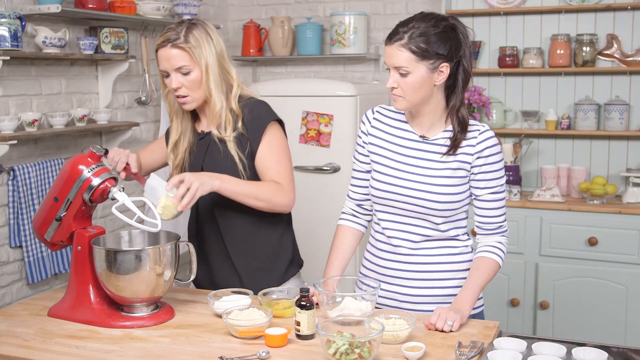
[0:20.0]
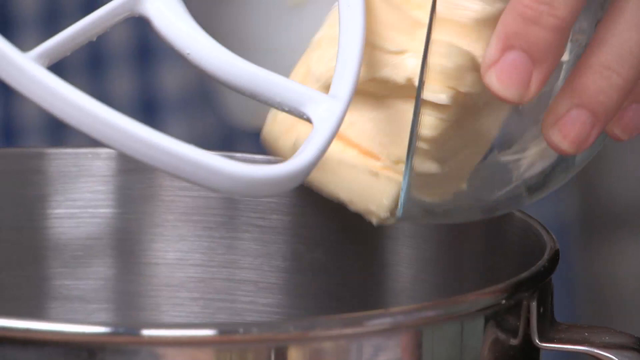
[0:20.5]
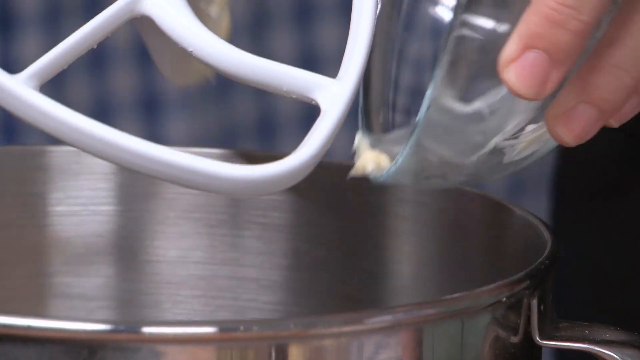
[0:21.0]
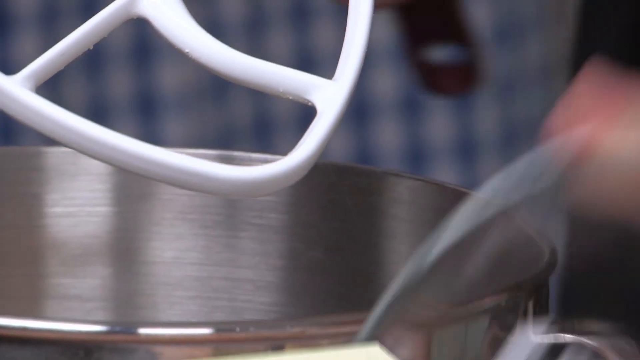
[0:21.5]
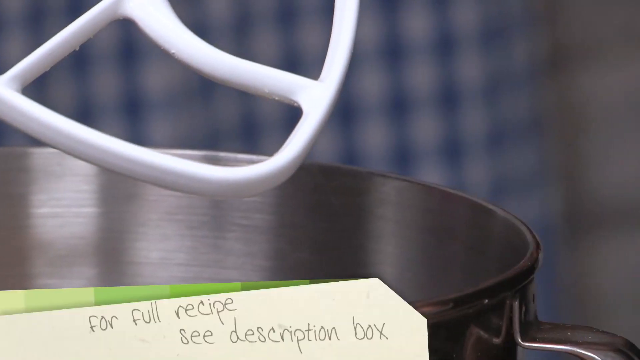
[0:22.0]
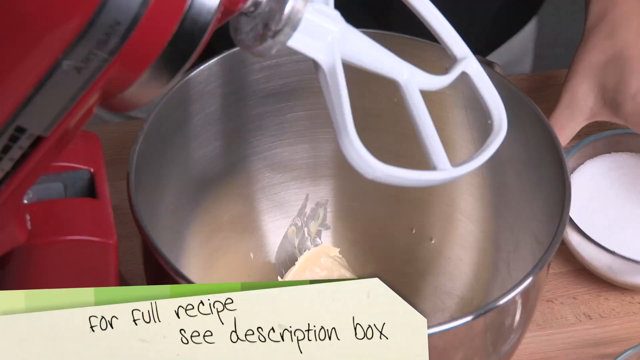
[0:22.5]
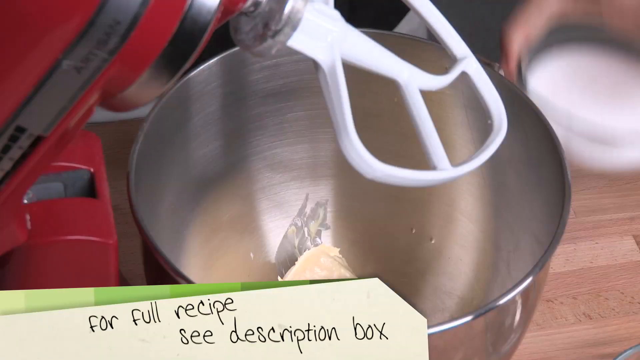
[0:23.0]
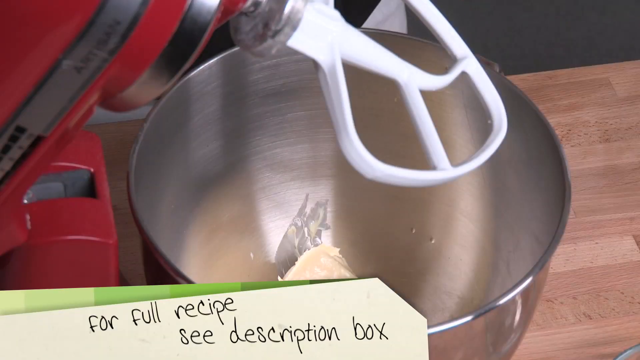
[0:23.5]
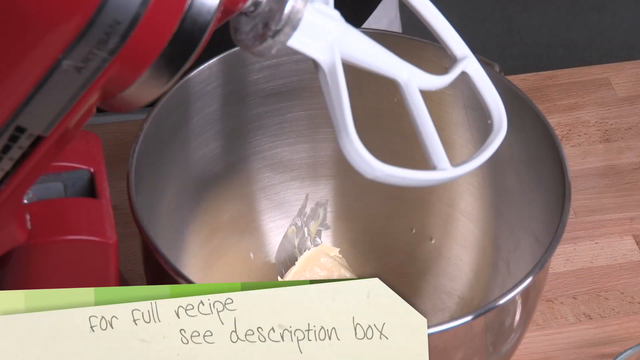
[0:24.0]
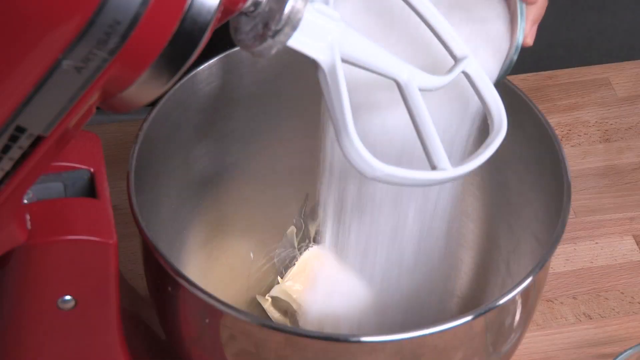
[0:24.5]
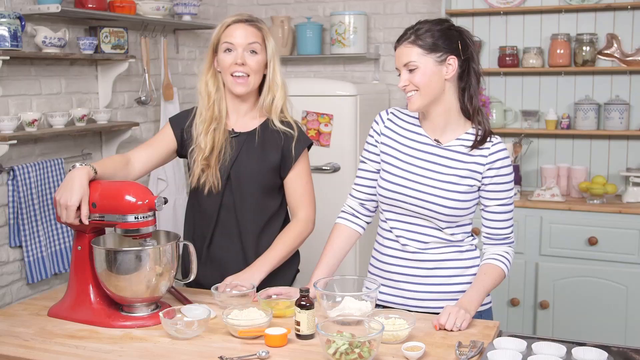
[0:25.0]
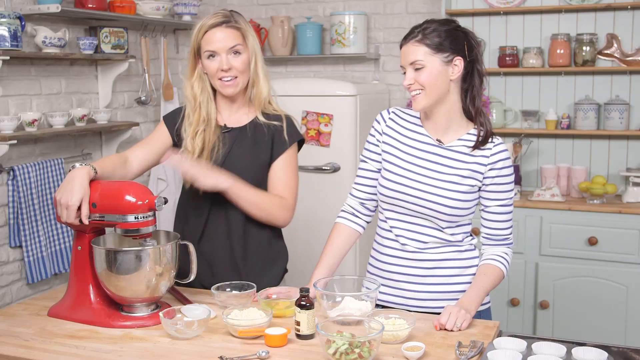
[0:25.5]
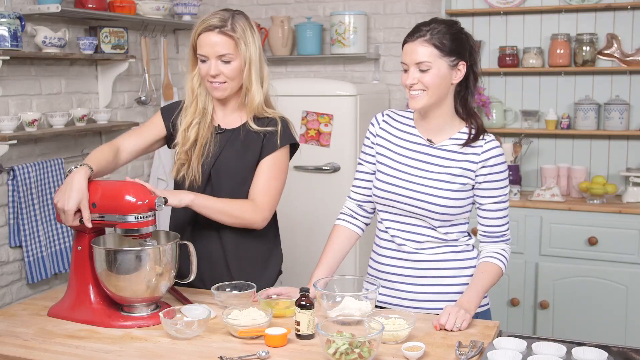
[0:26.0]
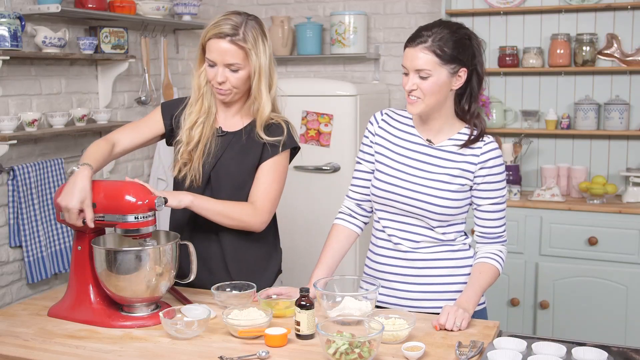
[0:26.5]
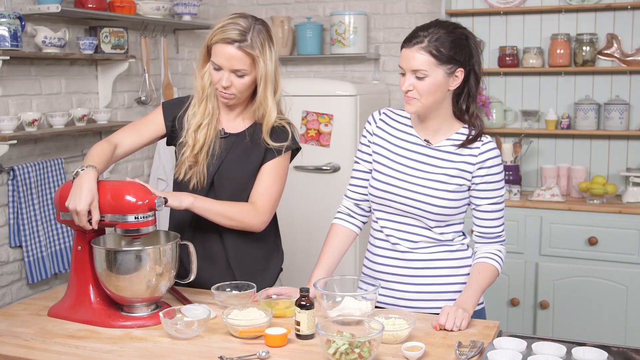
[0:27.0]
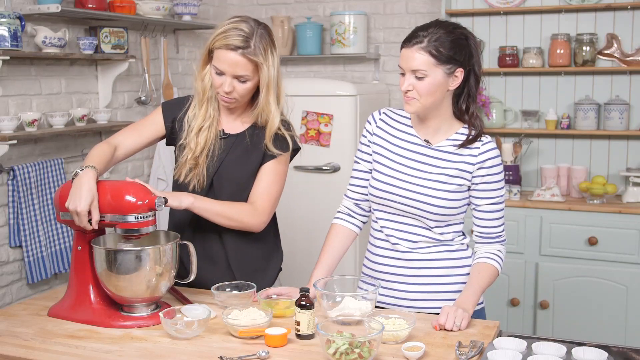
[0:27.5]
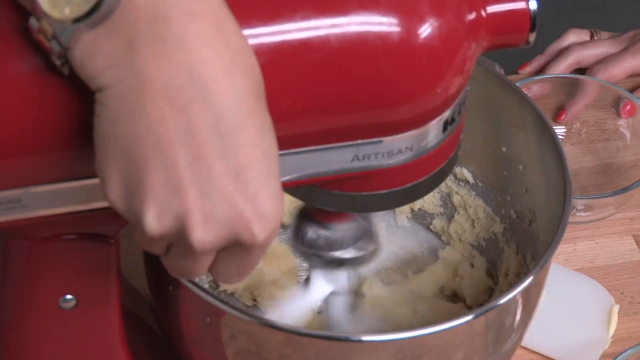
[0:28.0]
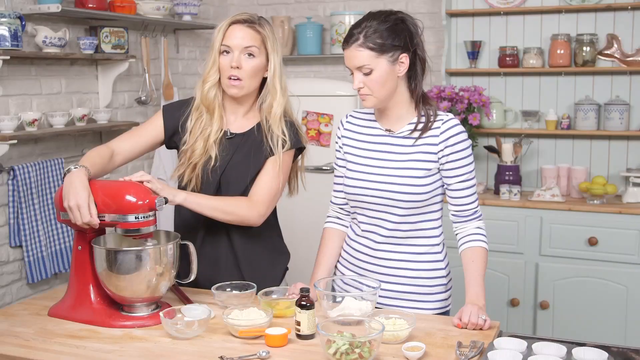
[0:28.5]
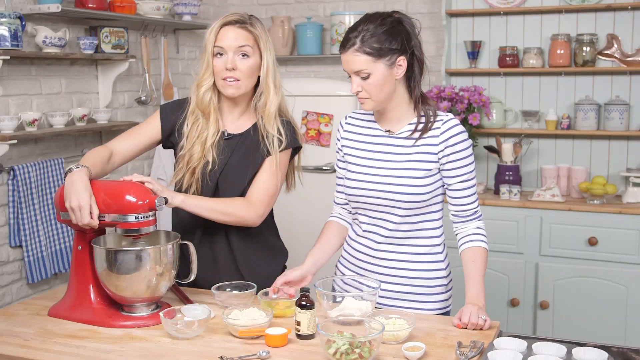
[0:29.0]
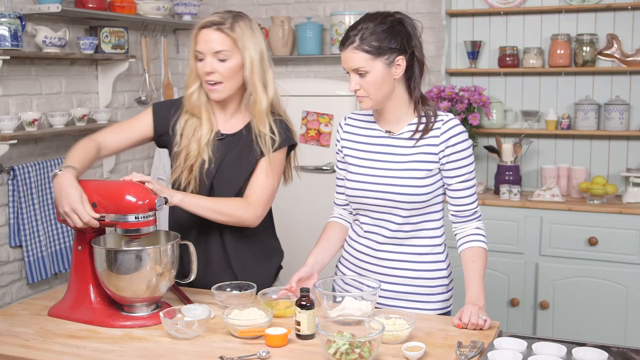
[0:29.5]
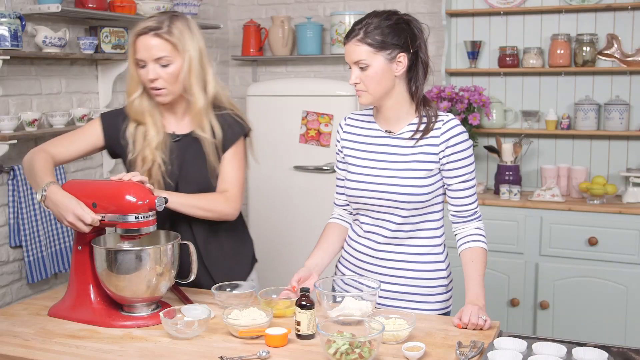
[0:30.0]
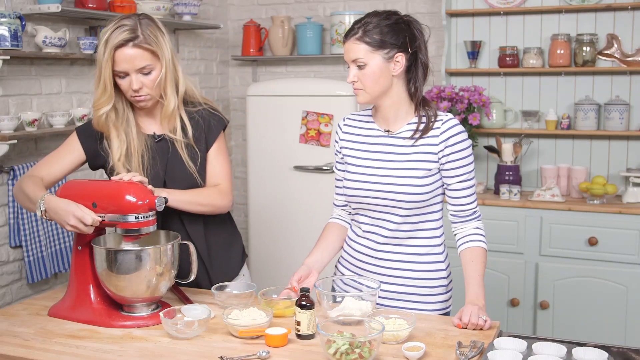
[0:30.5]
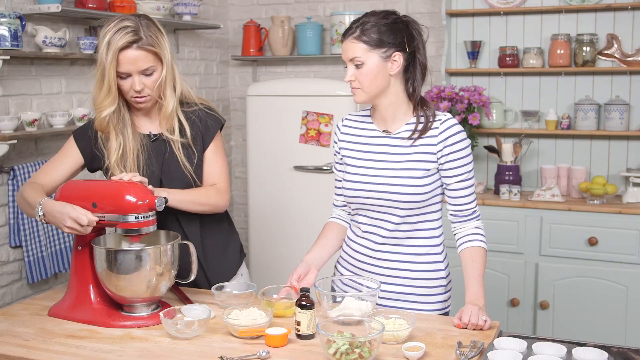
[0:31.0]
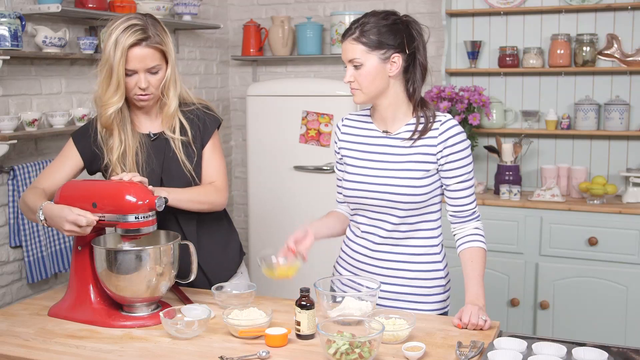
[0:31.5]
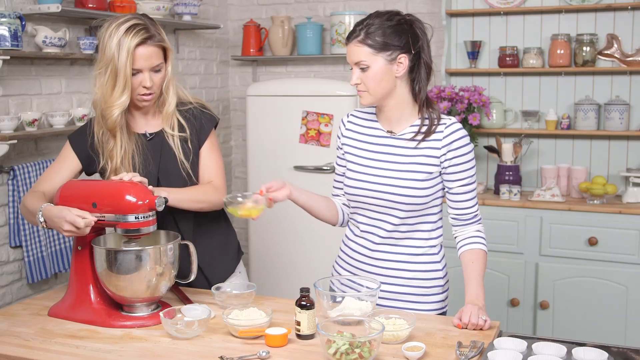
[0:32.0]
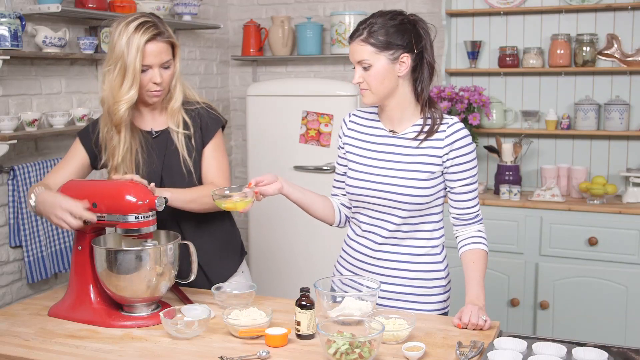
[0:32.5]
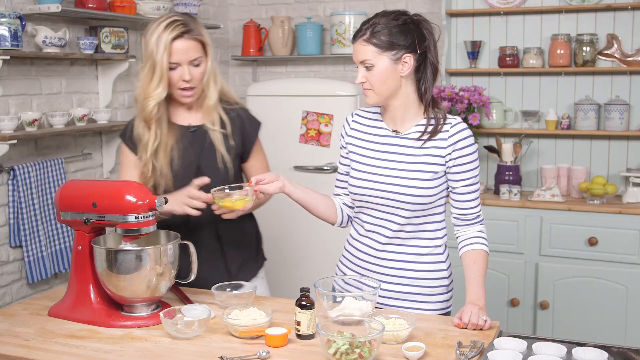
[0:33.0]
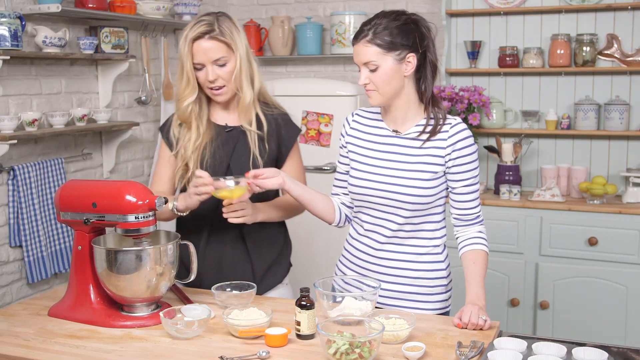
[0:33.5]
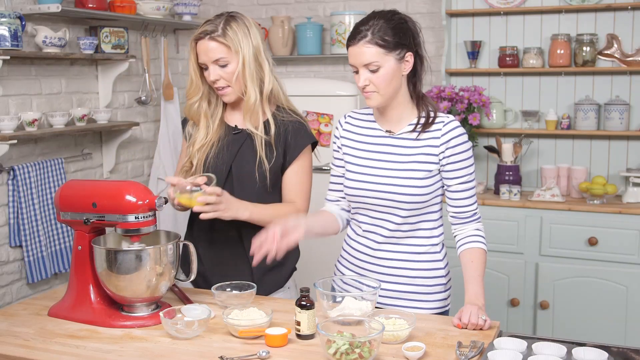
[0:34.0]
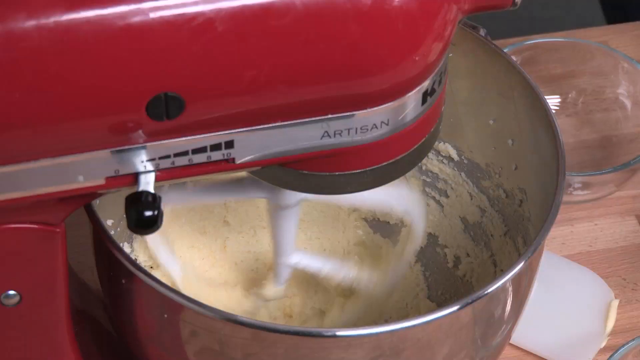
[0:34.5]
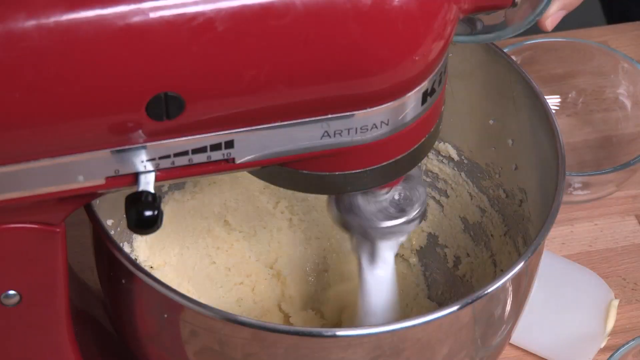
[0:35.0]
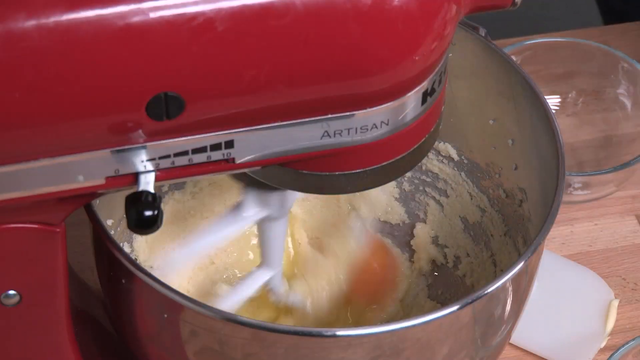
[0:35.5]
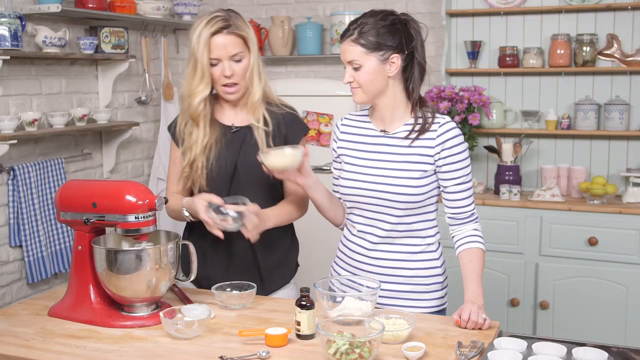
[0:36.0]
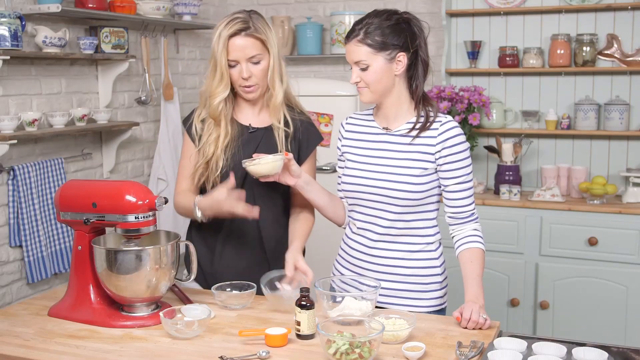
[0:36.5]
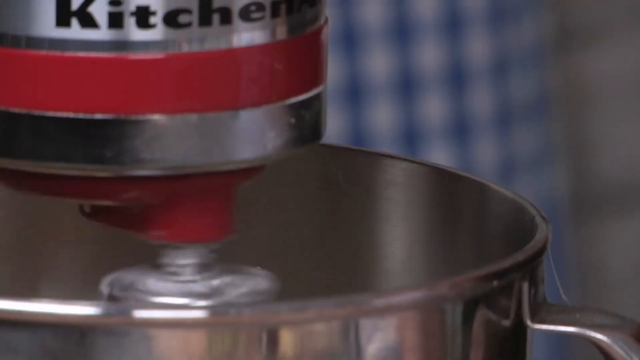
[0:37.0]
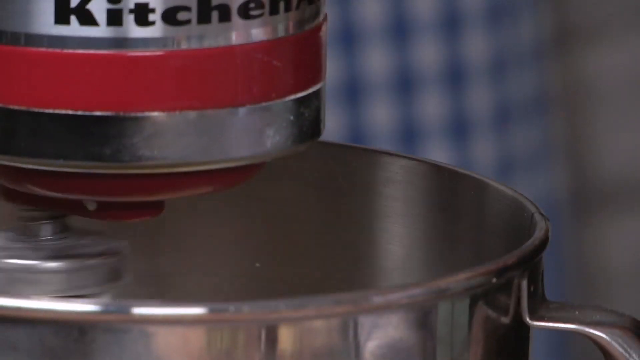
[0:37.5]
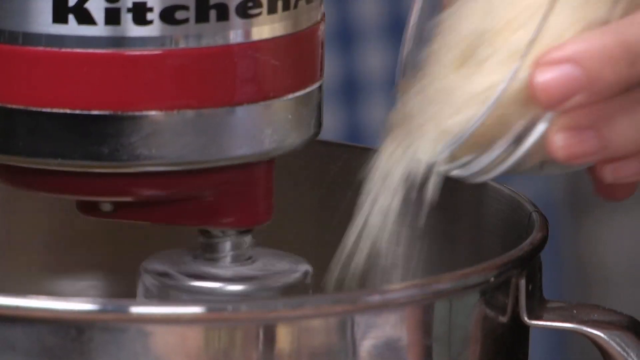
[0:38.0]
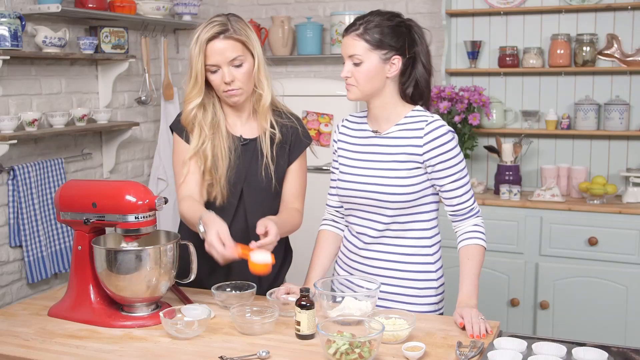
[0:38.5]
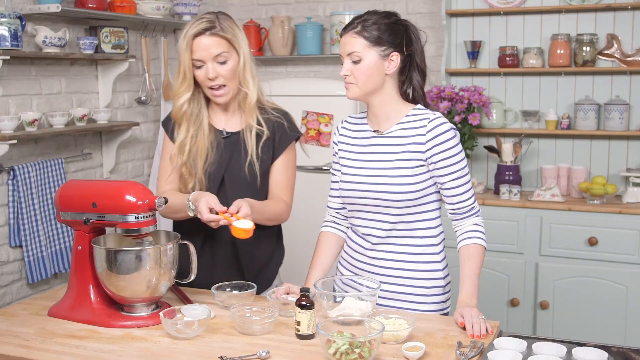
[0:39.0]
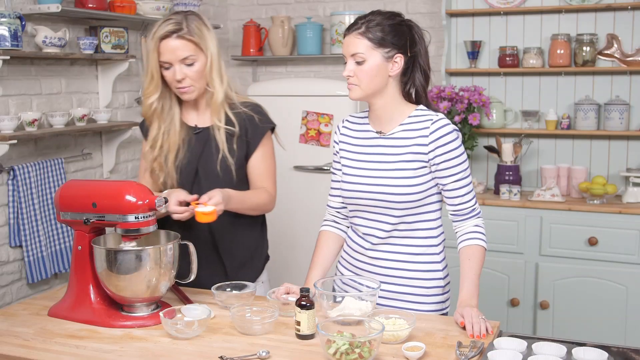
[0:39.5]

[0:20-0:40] On-screen text begins "keep calm and bake" and mentions "white chocolate muffins." The two ladies seem to be cooking, apparently making white chocolate muffins. One picks up a spatula and pours something, which seems to be butter, into the mixture.